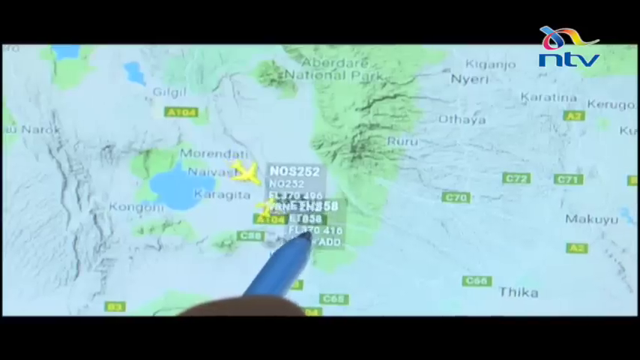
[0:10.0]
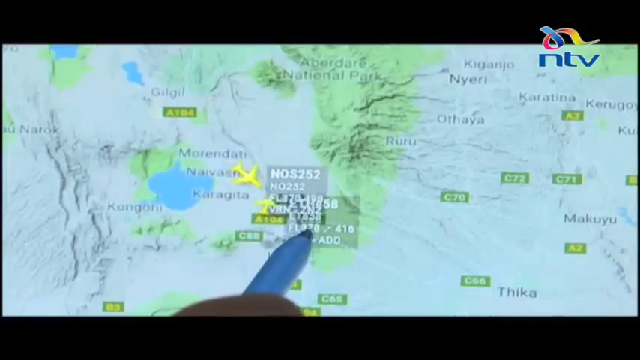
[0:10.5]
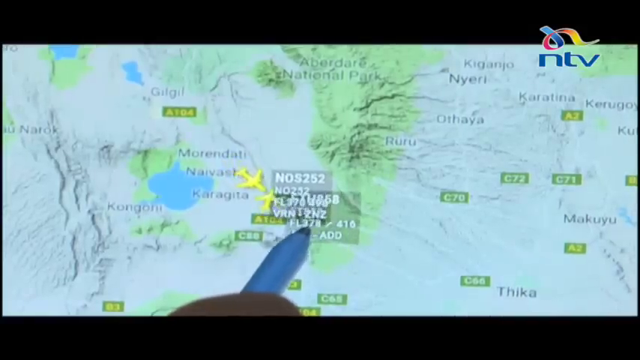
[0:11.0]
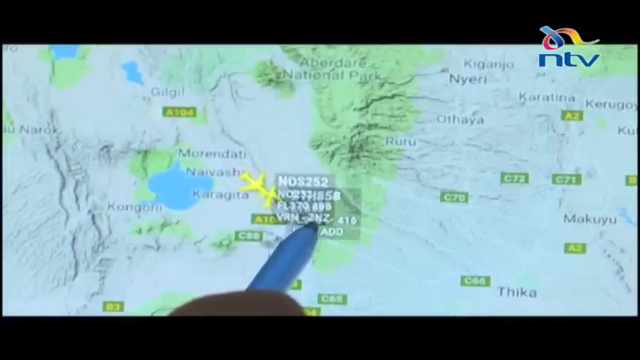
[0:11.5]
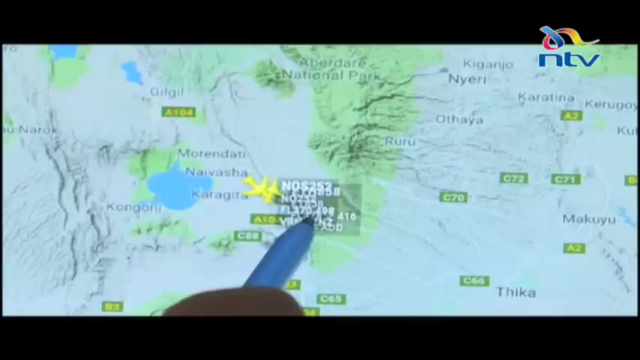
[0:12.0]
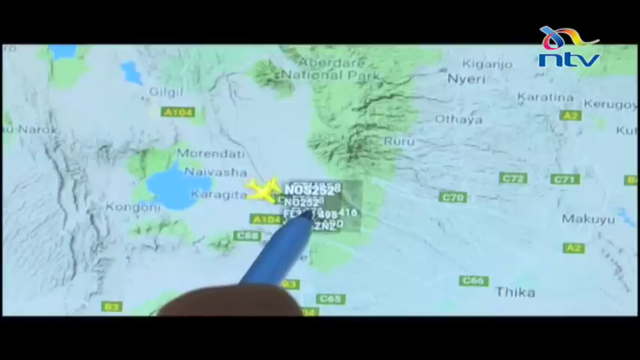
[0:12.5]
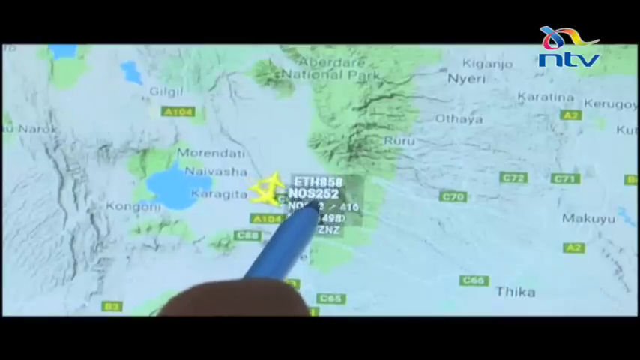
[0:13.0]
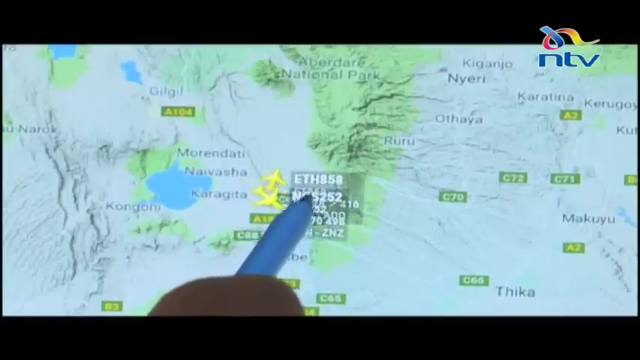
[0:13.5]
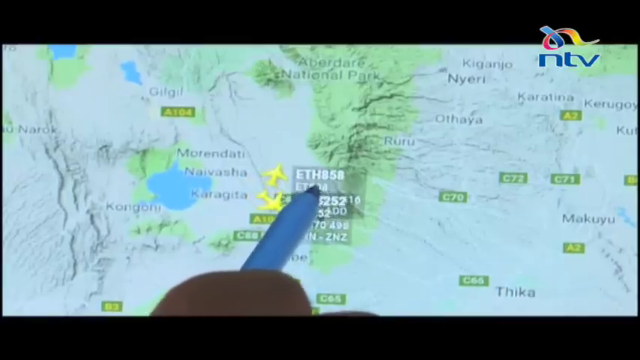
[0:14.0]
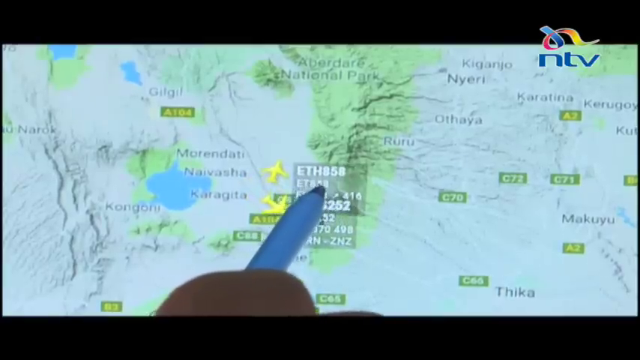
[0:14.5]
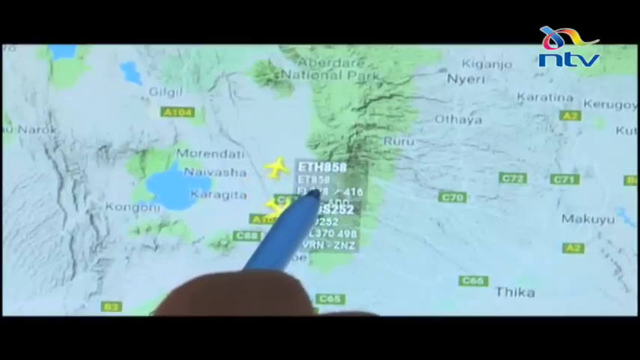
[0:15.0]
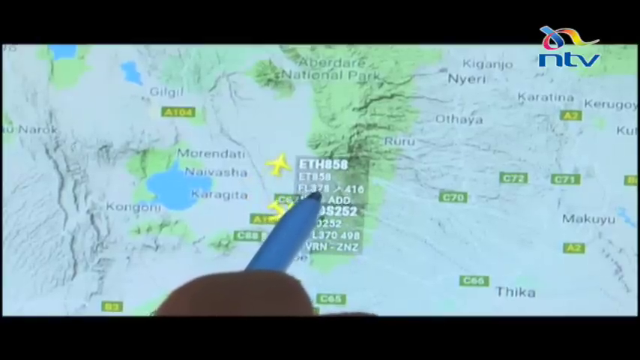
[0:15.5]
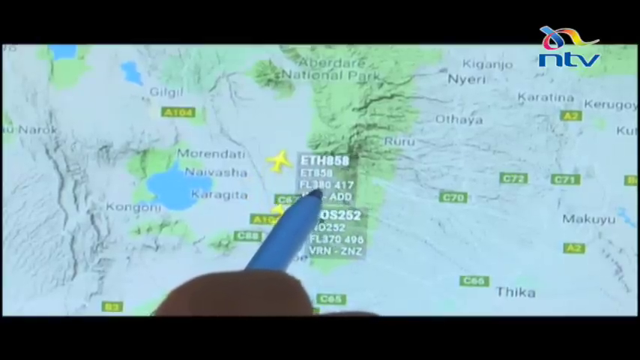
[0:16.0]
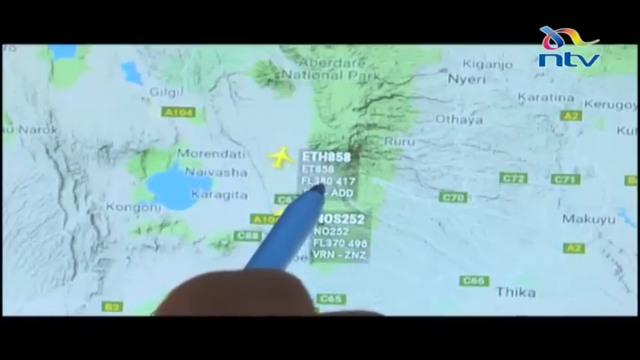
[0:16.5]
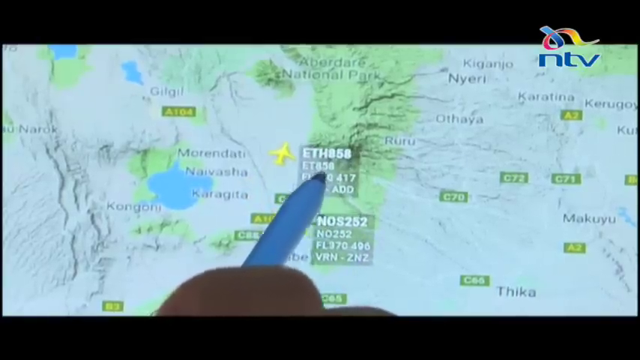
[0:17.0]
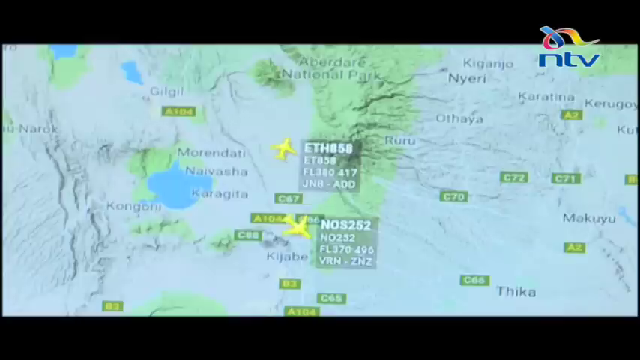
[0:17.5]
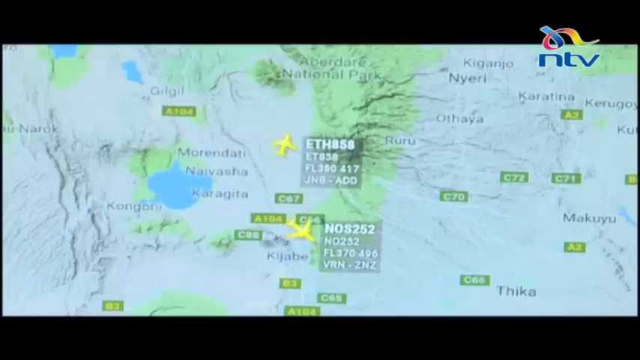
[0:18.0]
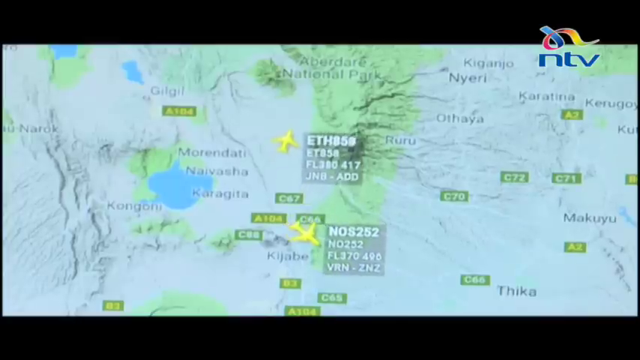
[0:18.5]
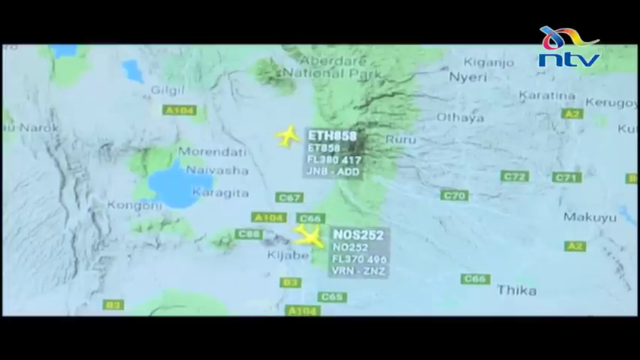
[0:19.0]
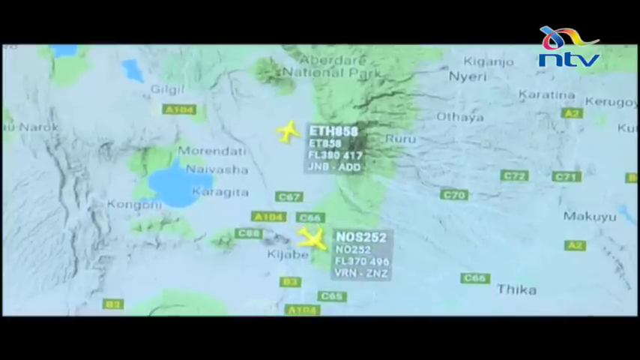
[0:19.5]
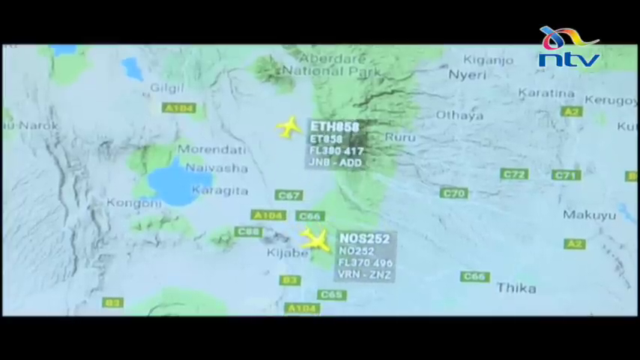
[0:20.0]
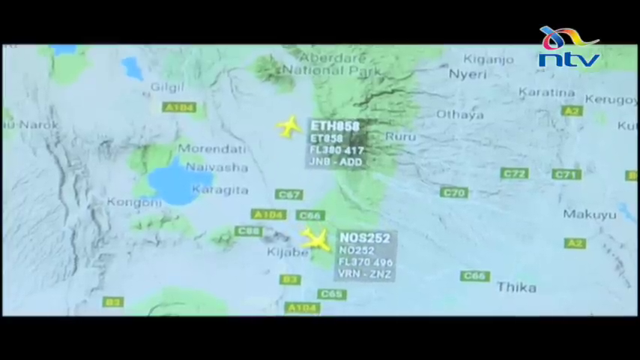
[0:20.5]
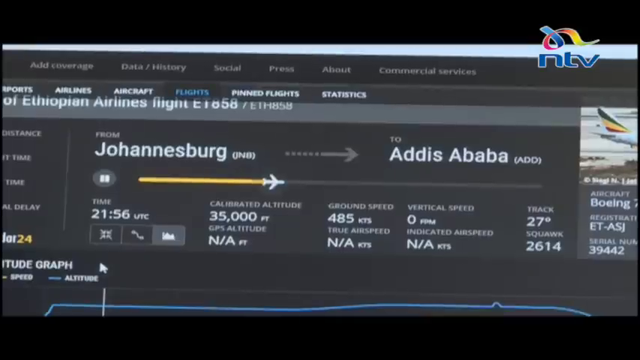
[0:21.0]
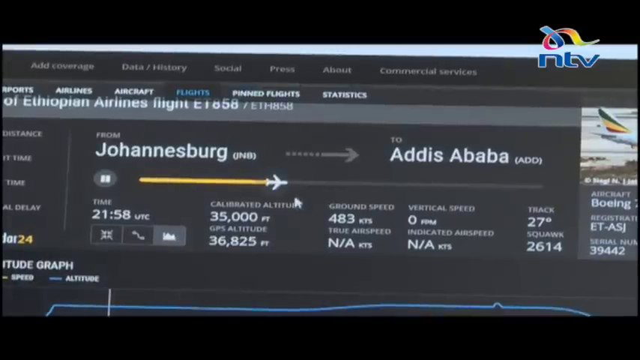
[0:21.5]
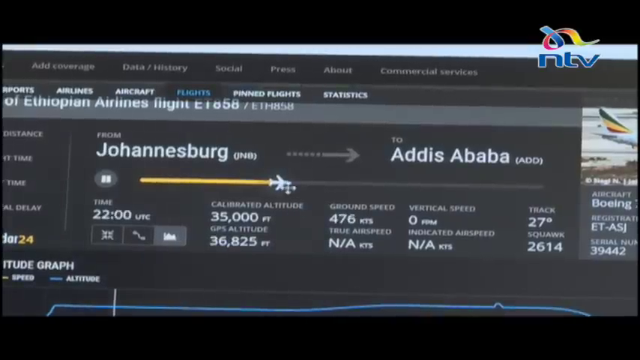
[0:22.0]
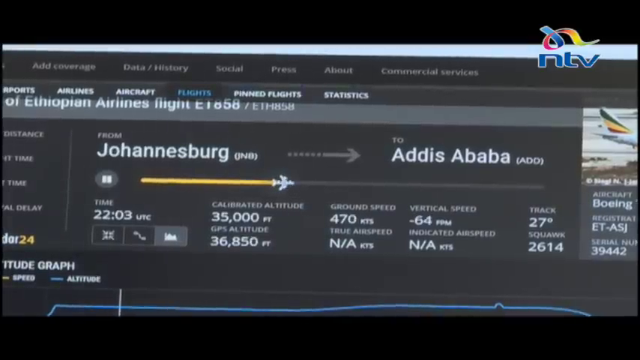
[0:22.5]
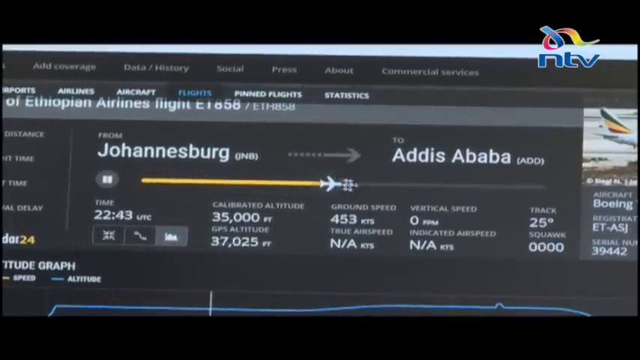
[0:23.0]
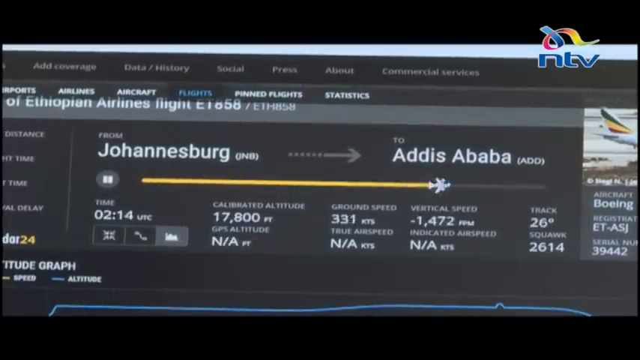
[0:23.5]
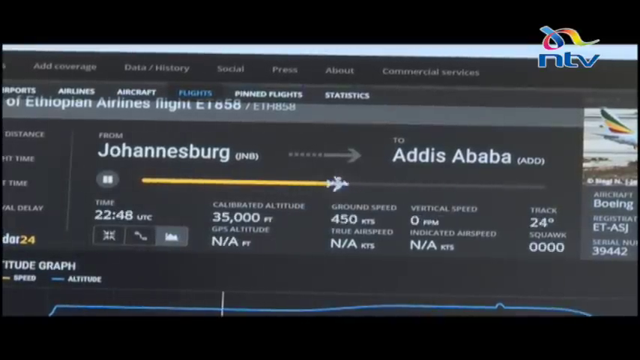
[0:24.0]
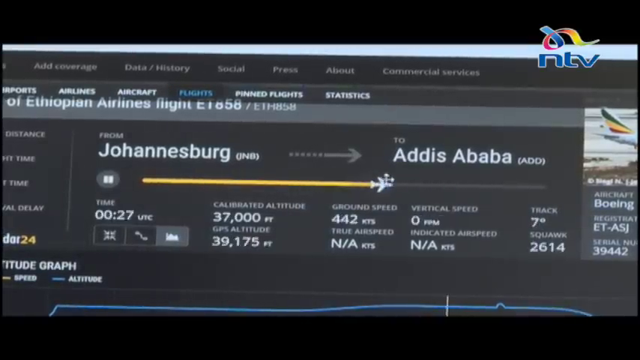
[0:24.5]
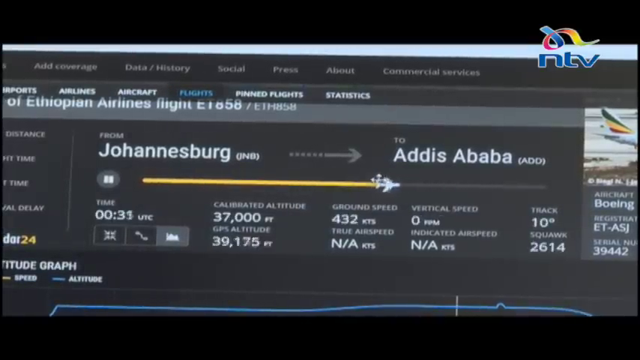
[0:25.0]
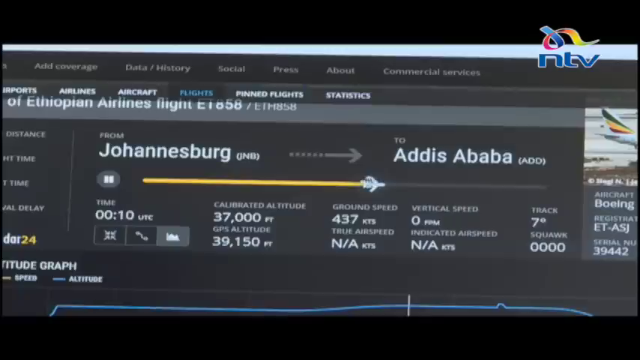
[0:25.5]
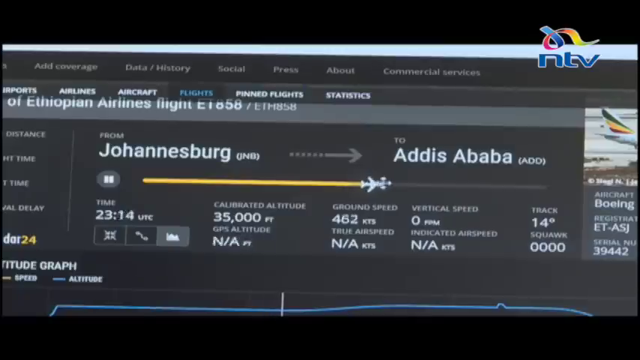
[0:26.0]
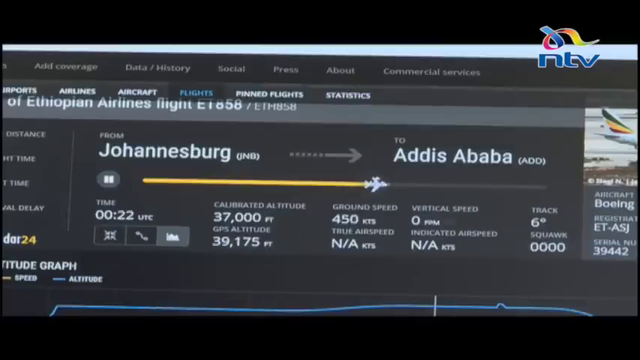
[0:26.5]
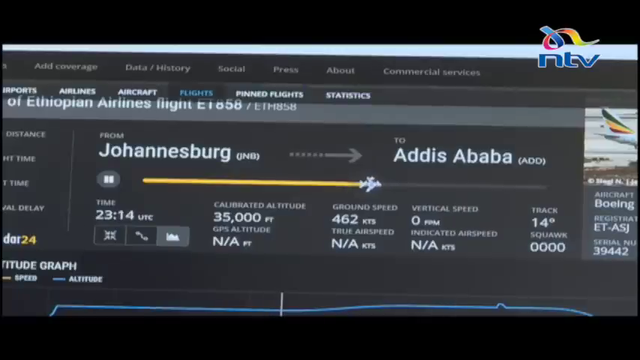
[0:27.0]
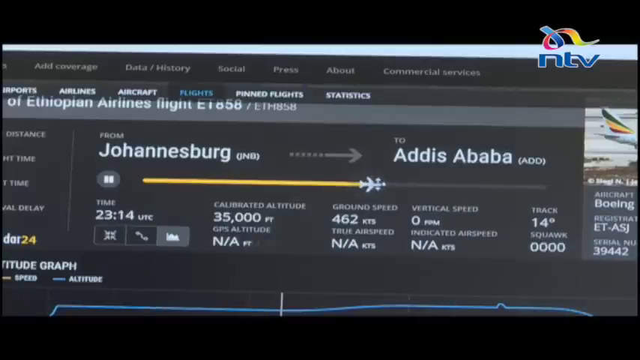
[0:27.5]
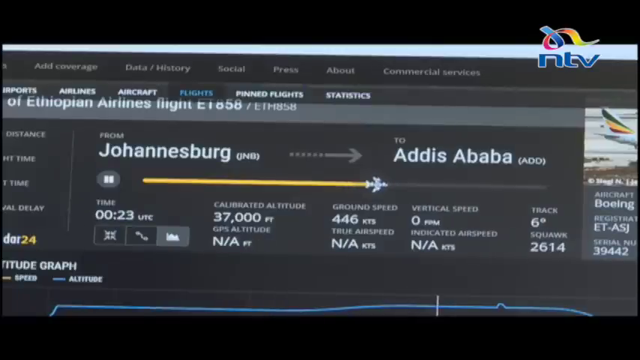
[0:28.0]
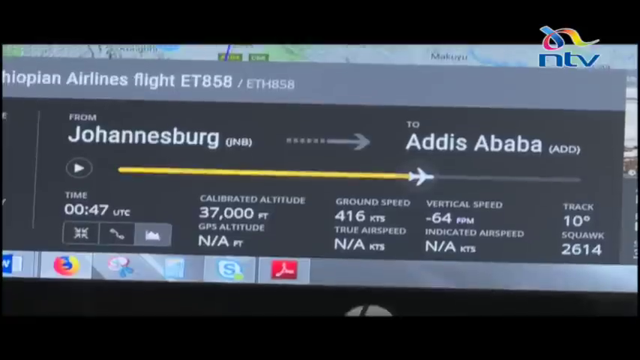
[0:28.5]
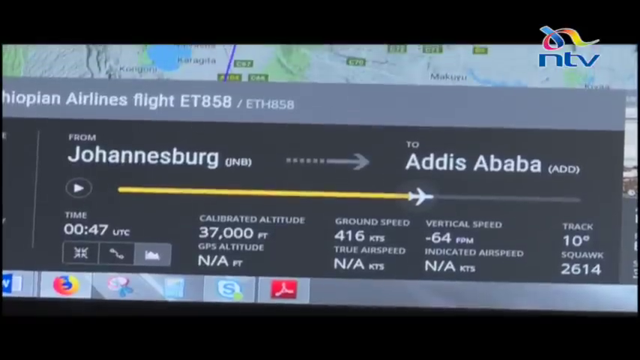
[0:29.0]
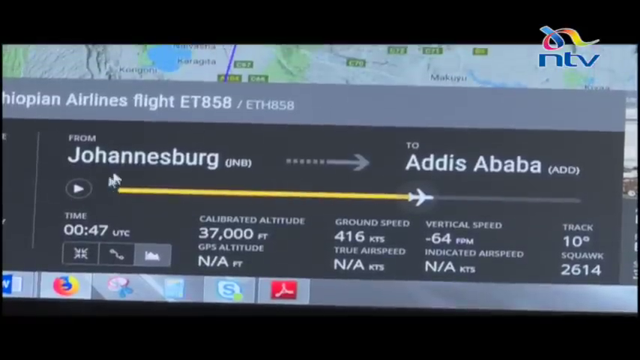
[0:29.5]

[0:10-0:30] A screen shows different countries, with country names and numbers that include letters. Someone with a pen points at numbers on the screen. Aeroplanes on the map keep moving slowly. Then a website shows Johannesburg to Addis Ababa, apparently a flight ticket from Johannesburg to Addis Ababa.